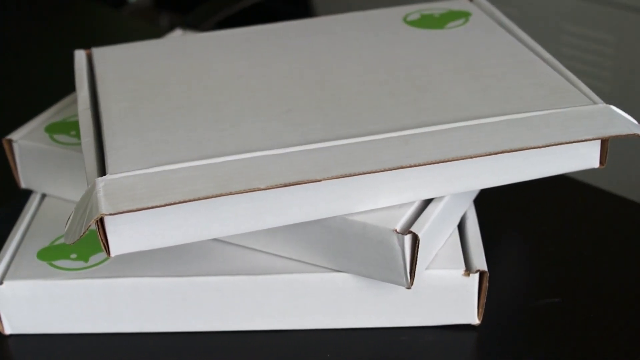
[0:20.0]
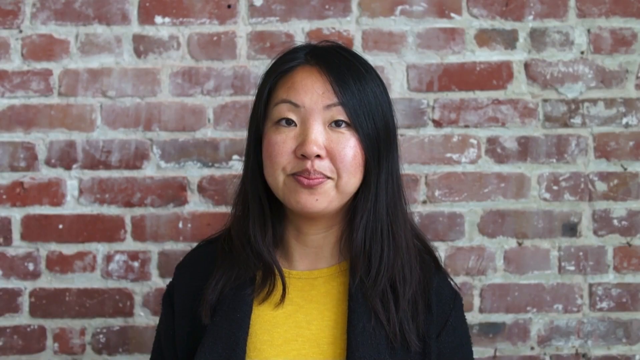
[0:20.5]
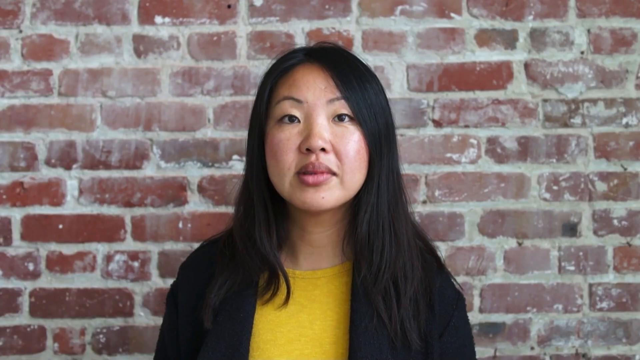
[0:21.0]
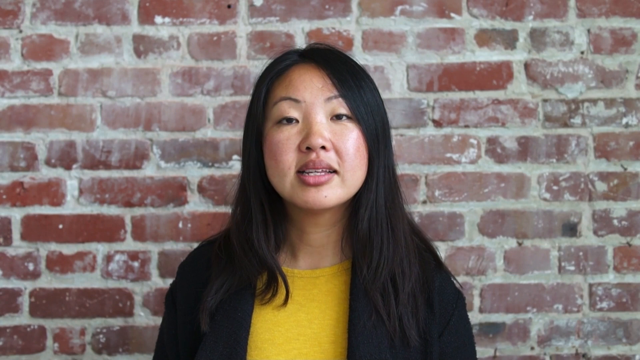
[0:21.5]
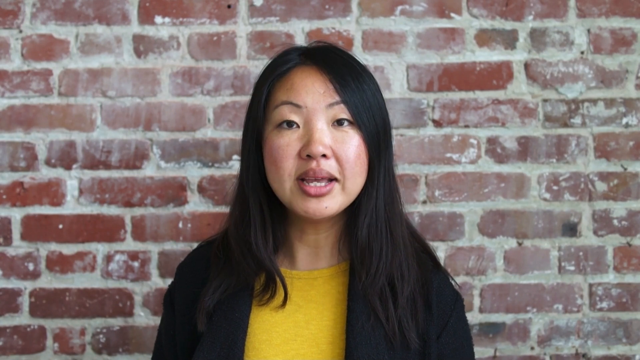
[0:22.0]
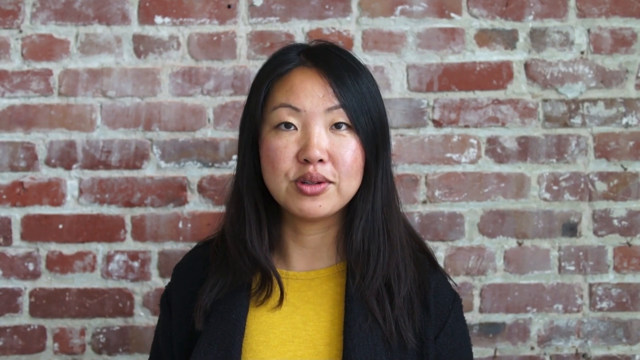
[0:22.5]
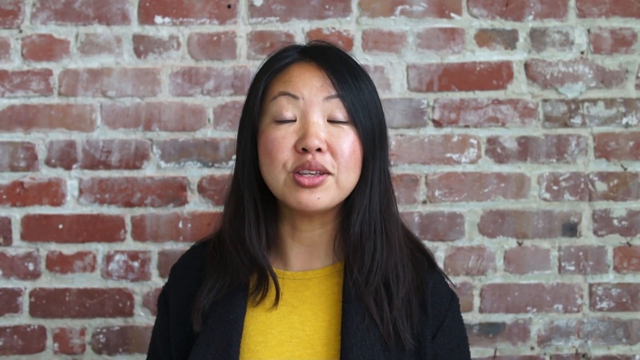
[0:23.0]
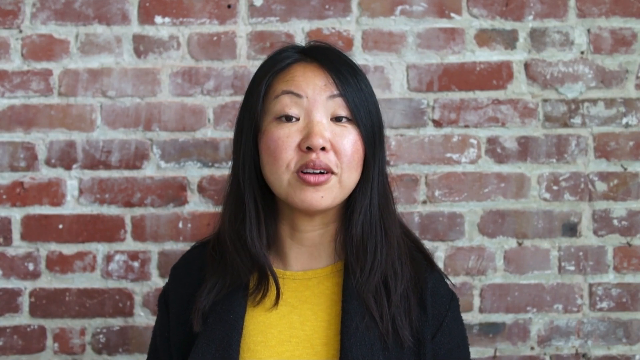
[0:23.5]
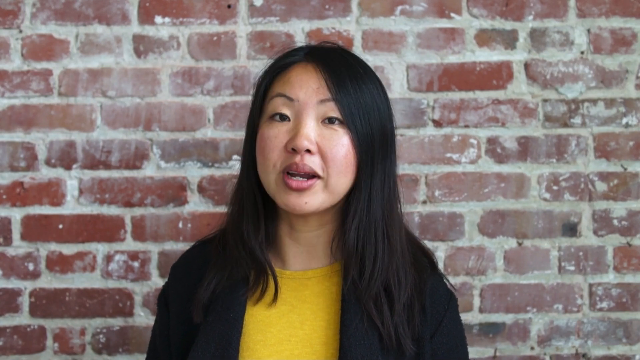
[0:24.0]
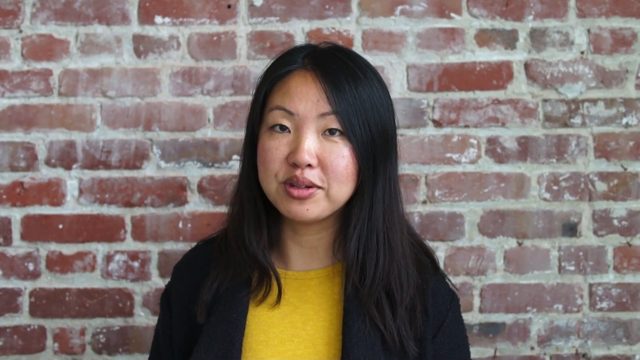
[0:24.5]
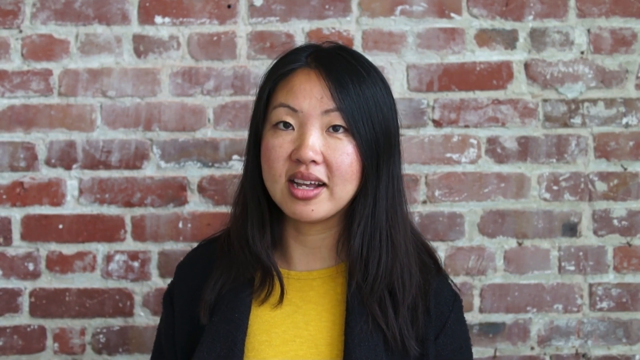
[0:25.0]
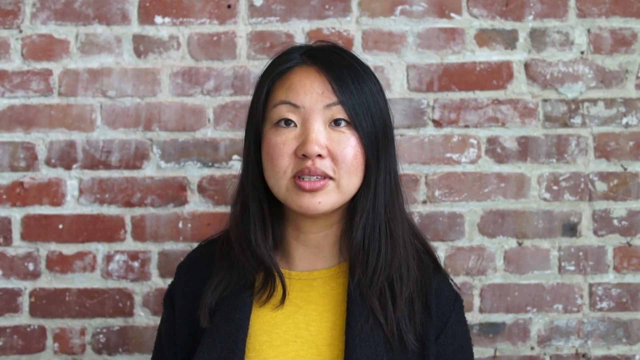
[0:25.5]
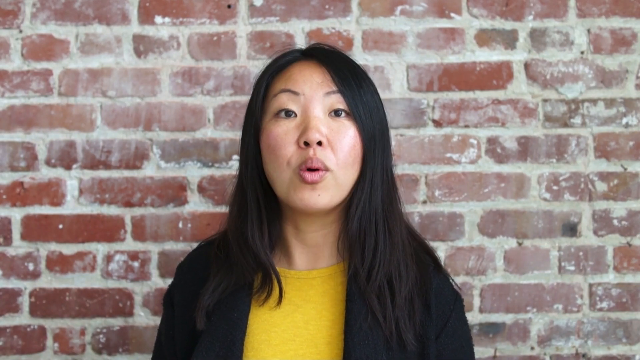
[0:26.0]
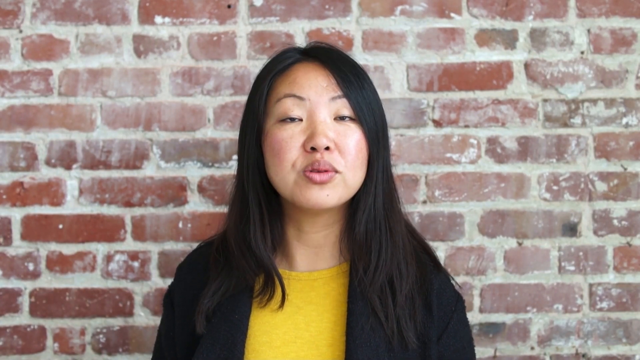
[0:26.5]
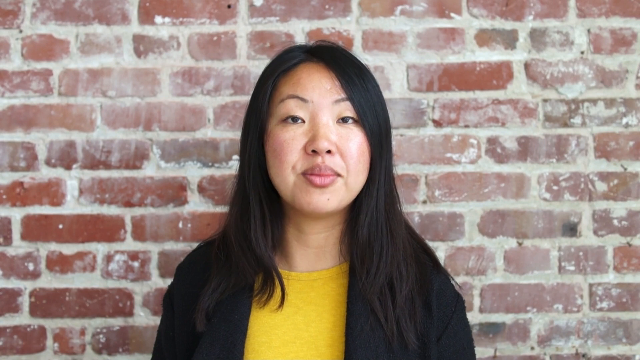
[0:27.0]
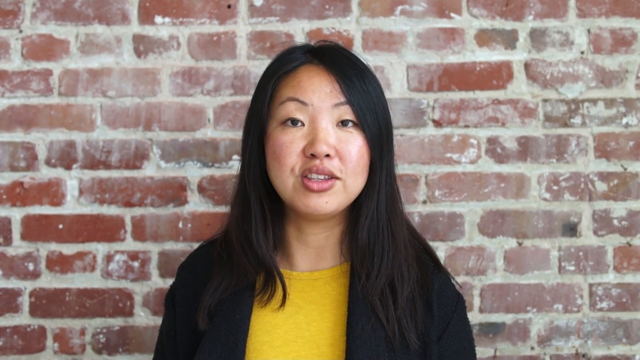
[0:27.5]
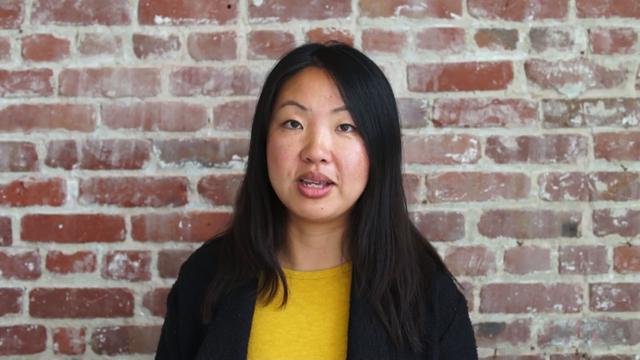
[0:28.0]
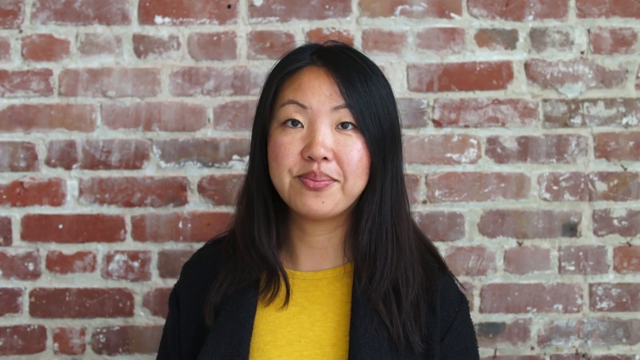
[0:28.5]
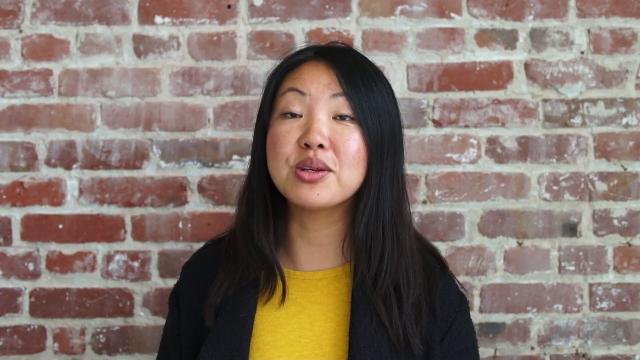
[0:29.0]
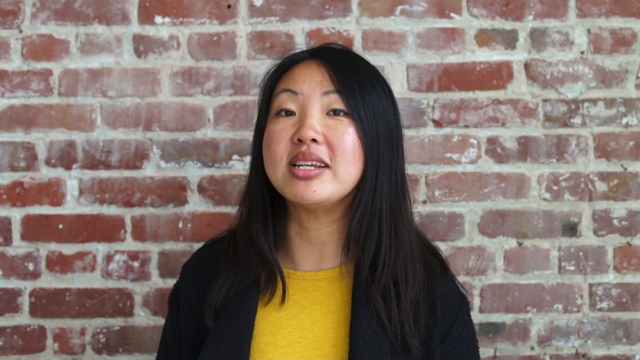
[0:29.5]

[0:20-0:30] A stack of boxes is shown while the woman talks.